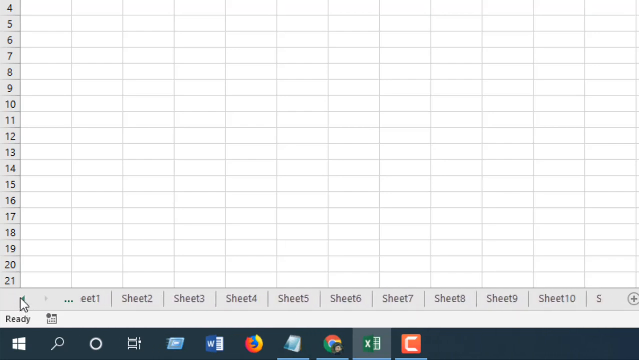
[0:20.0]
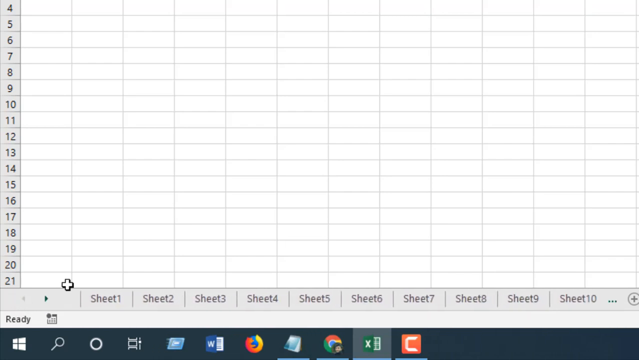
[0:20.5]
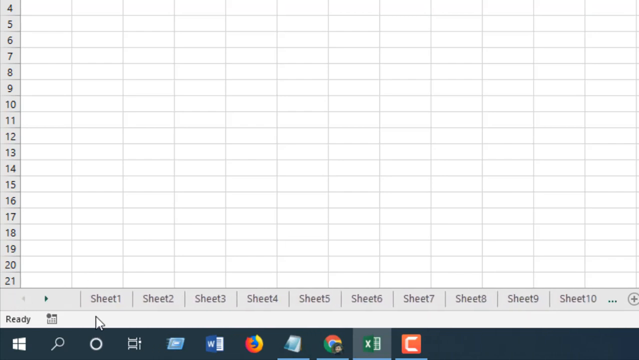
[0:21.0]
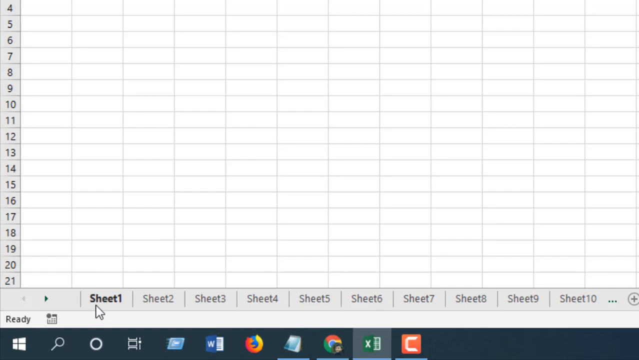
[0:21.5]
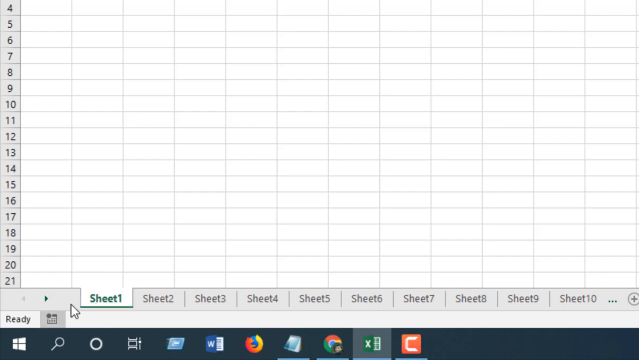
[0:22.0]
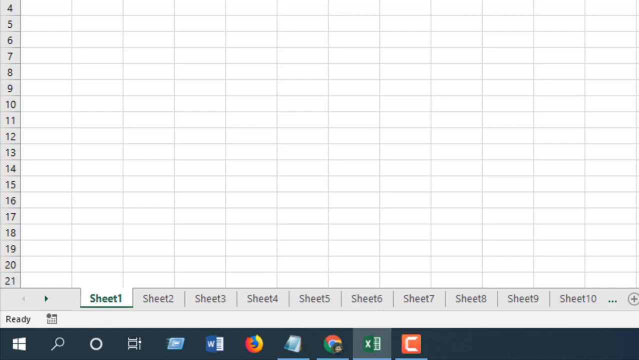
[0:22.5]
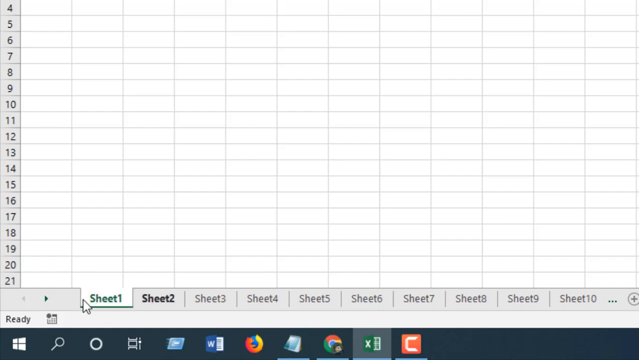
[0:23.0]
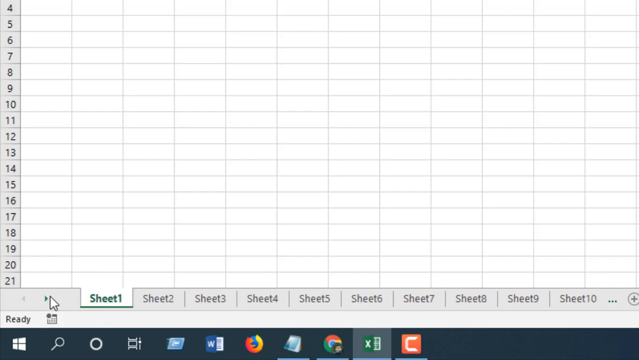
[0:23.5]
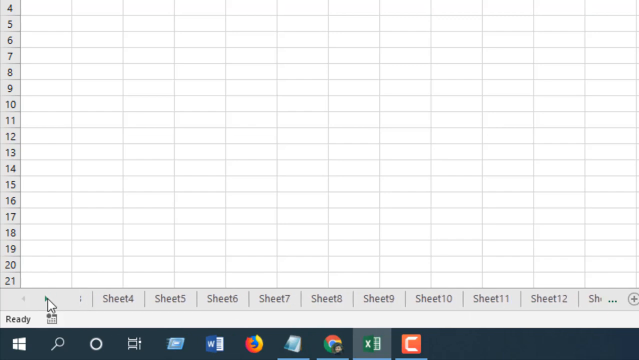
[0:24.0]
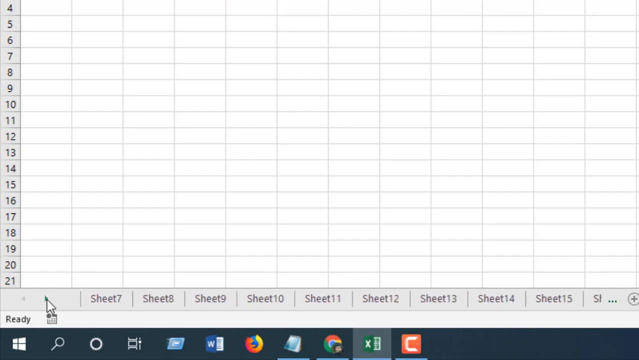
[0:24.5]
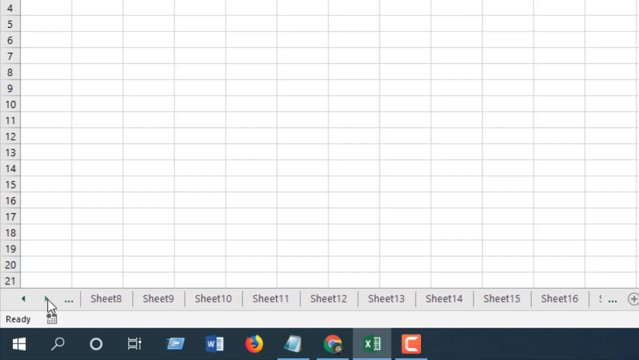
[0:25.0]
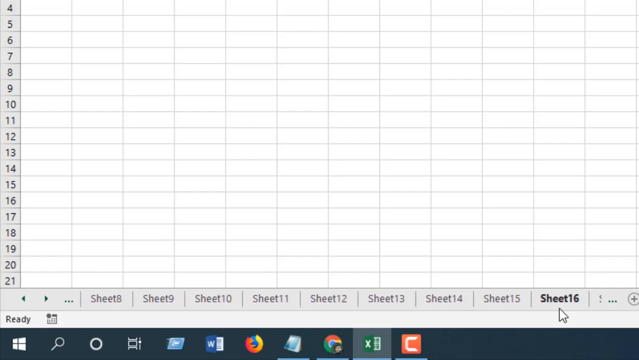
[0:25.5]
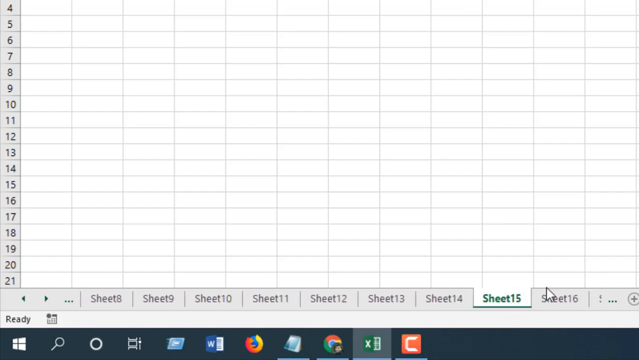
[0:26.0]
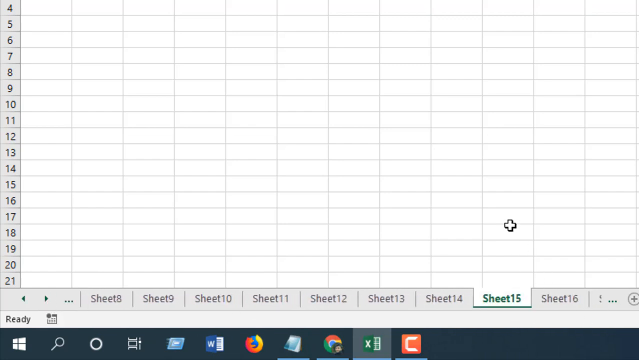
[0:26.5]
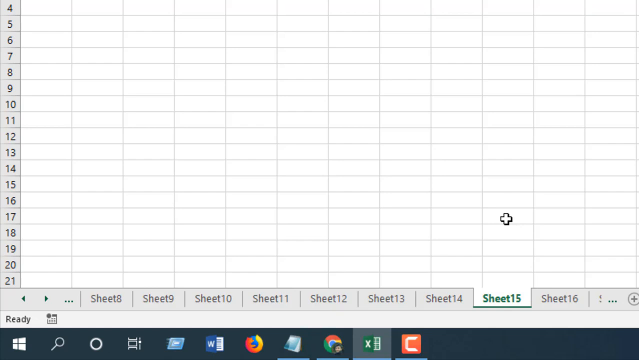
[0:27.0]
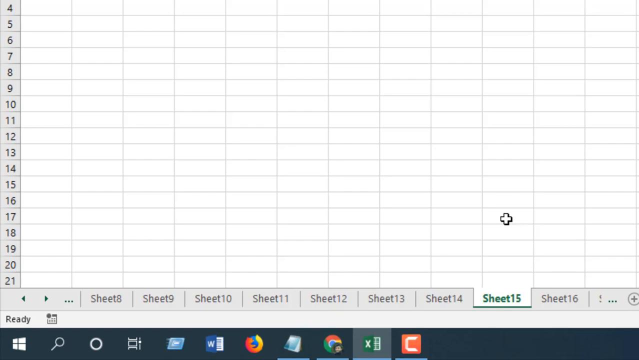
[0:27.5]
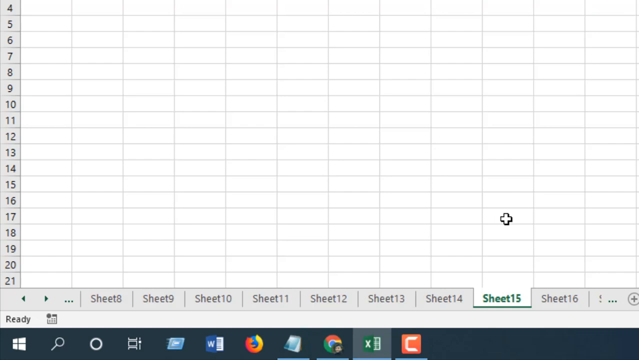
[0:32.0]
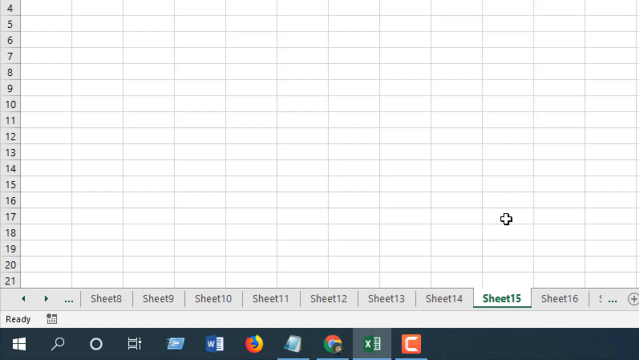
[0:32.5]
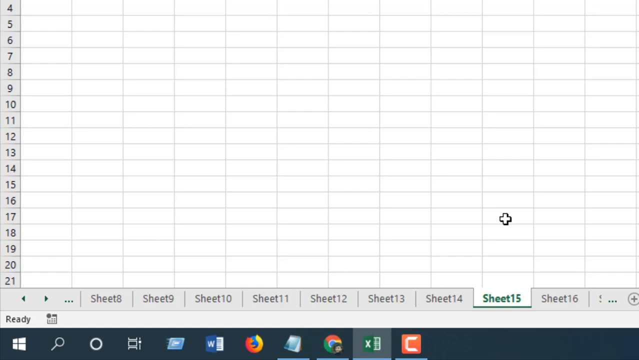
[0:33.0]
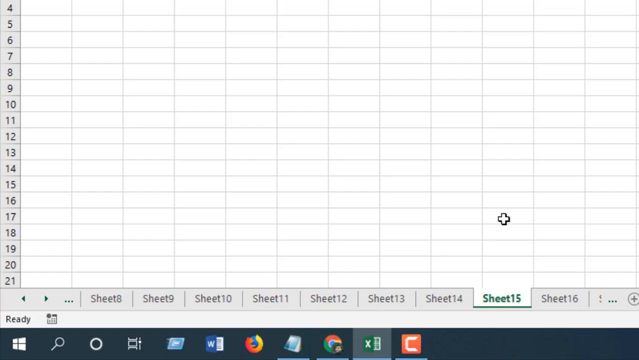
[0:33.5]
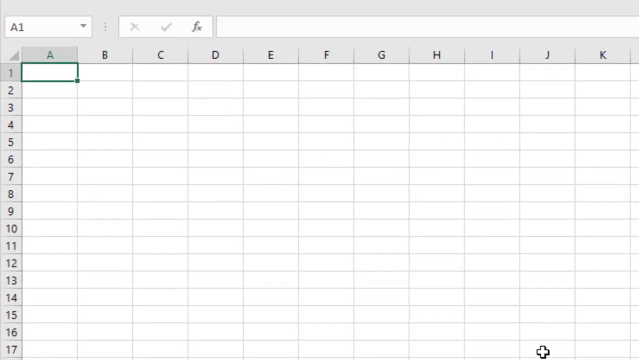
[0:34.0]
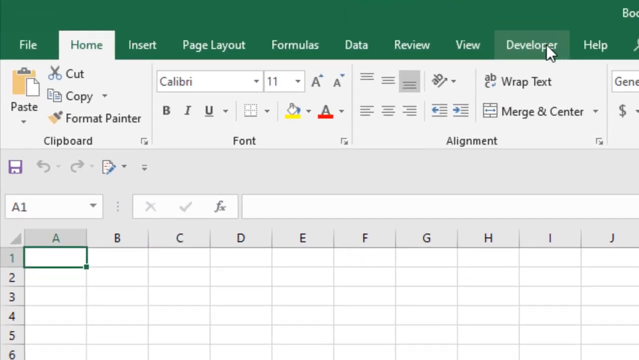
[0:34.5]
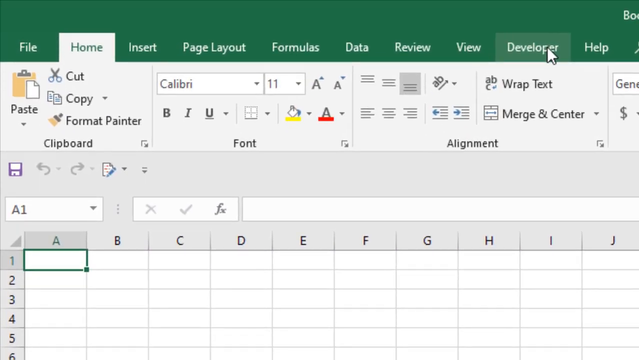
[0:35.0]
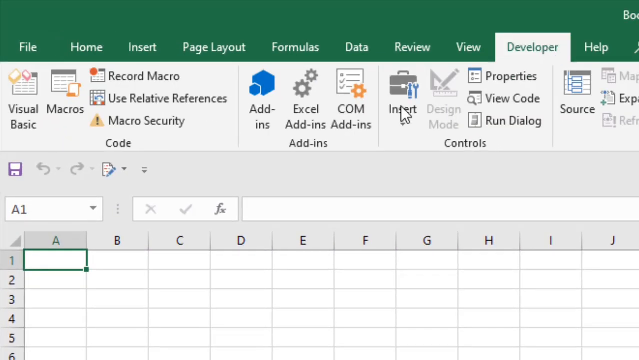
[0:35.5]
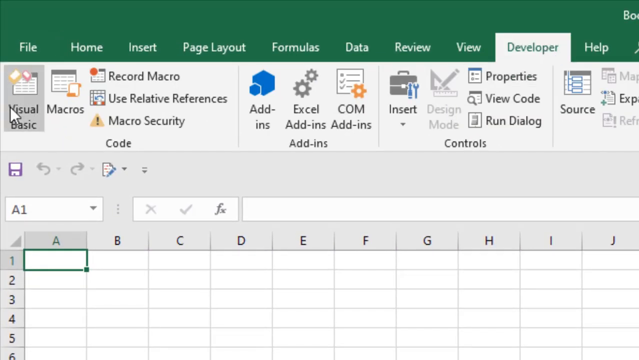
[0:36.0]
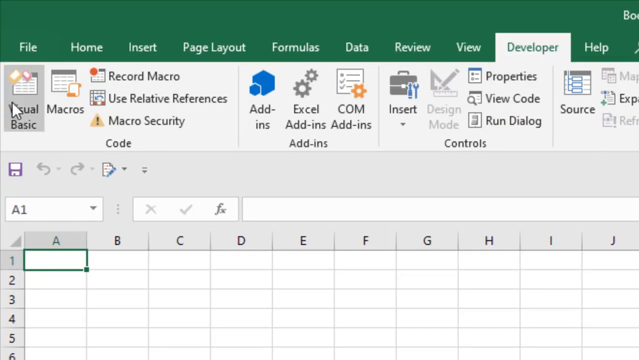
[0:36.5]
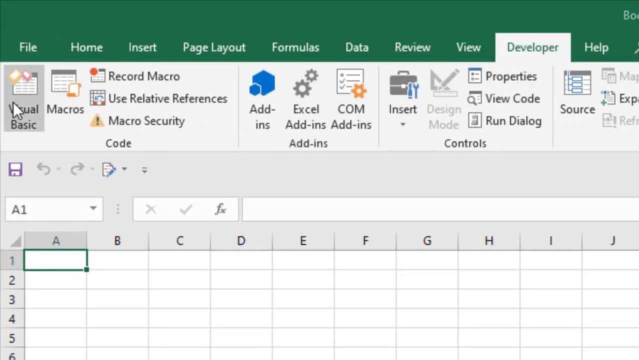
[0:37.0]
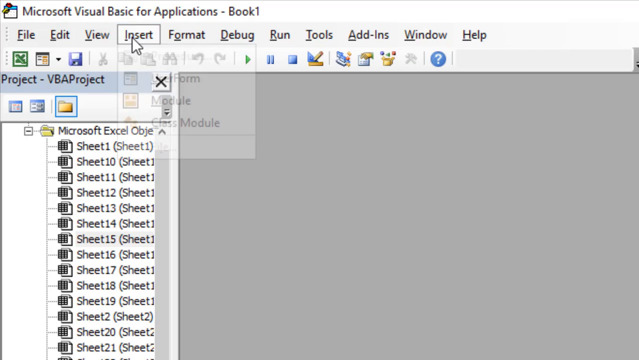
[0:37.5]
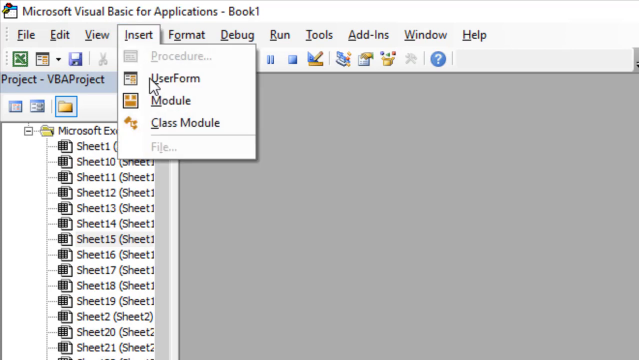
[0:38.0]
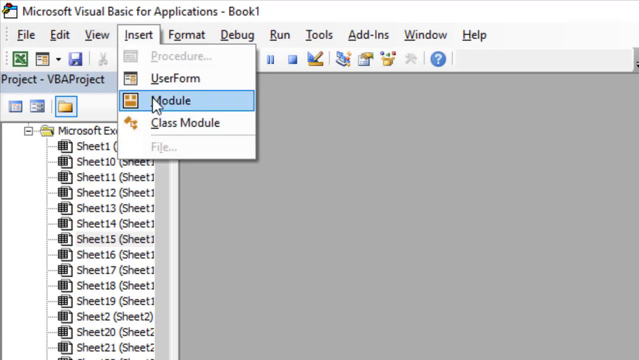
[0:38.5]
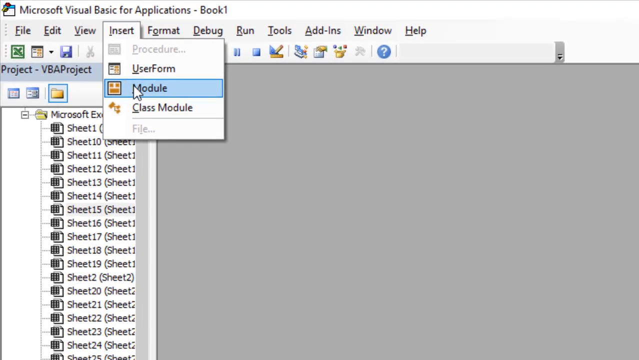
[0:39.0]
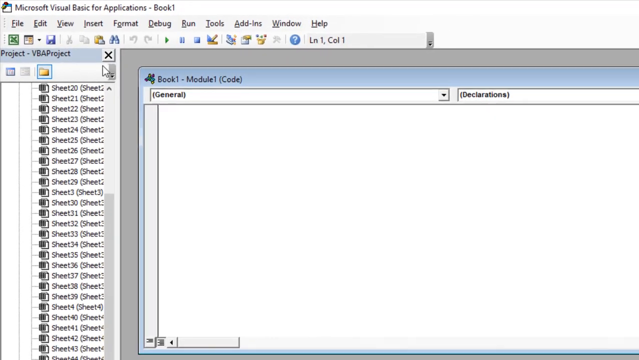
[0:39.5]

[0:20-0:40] What looks like a Microsoft Excel work template is open, with many different Excel tab sheets. The user clicks the button to move to the next tab and eventually stops at sheet 15. They then go to the top ribbon of the app to what looks like the Developer tab, and go to the Visual Basic button displayed at the top left-hand corner of that menu, opening it, apparently to add something such as a macro, table or module to sheet 15.